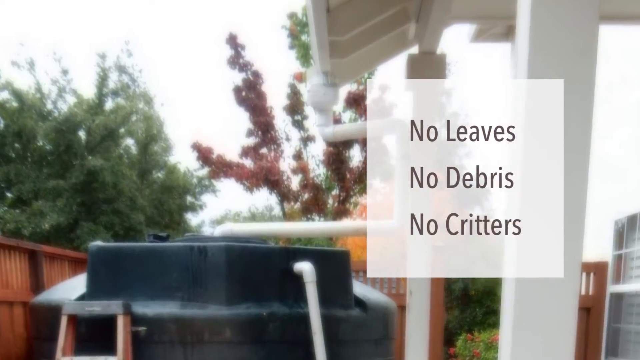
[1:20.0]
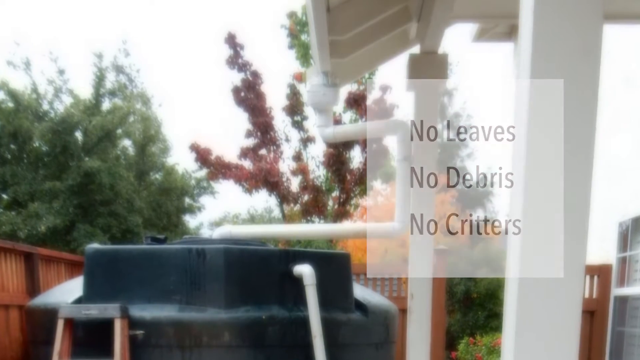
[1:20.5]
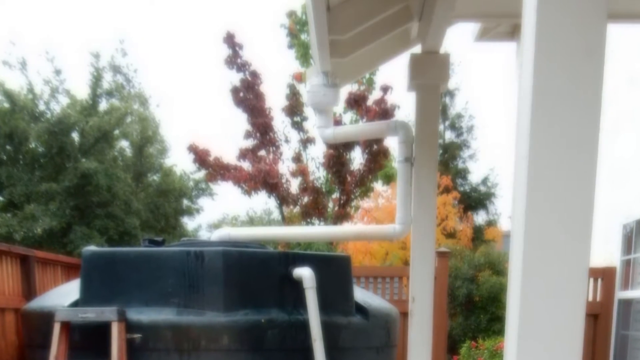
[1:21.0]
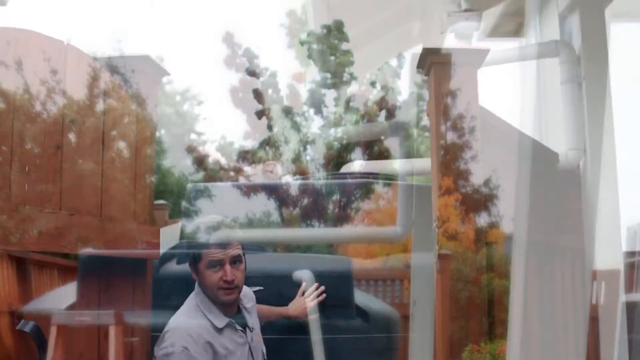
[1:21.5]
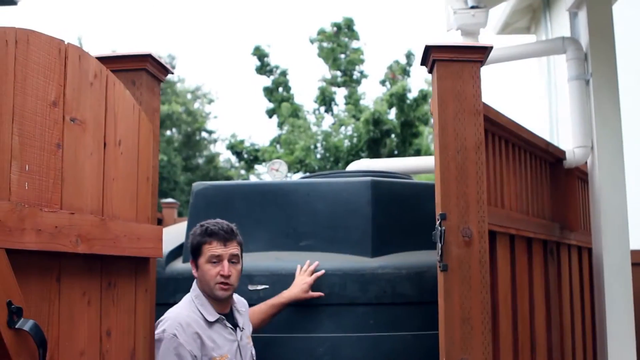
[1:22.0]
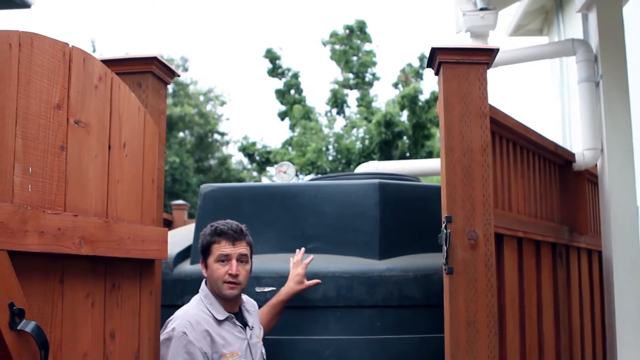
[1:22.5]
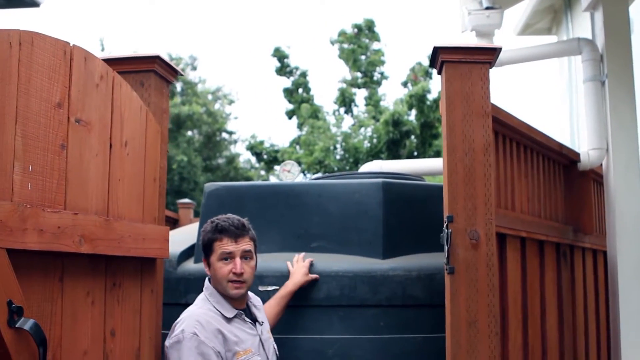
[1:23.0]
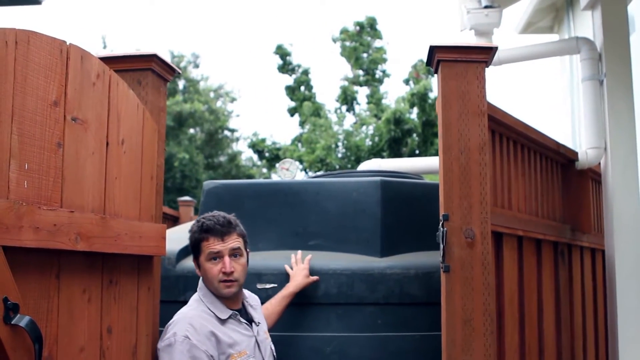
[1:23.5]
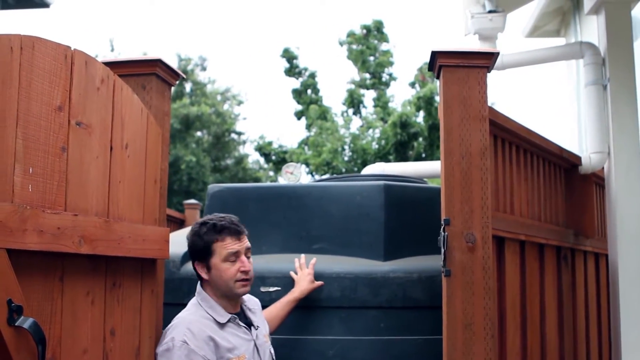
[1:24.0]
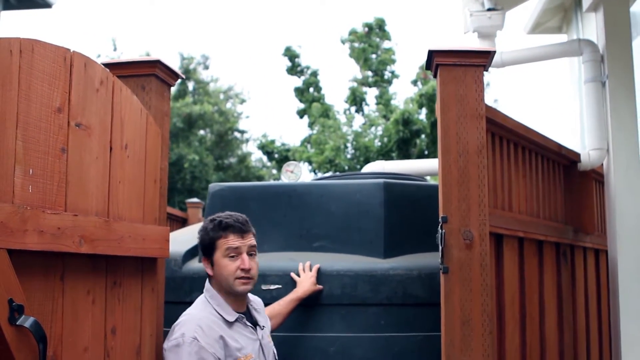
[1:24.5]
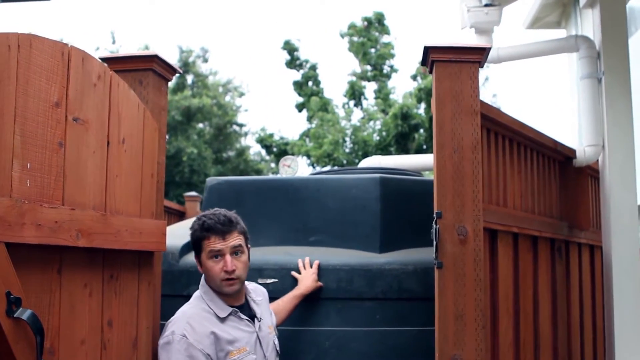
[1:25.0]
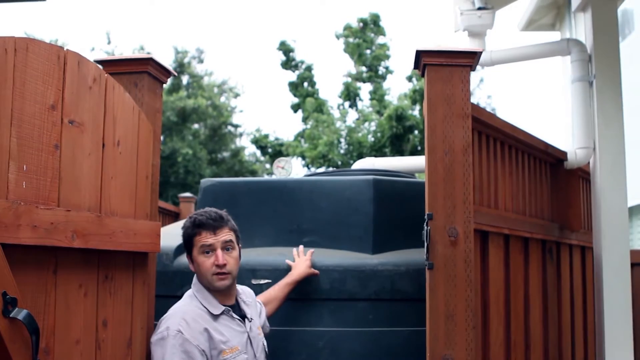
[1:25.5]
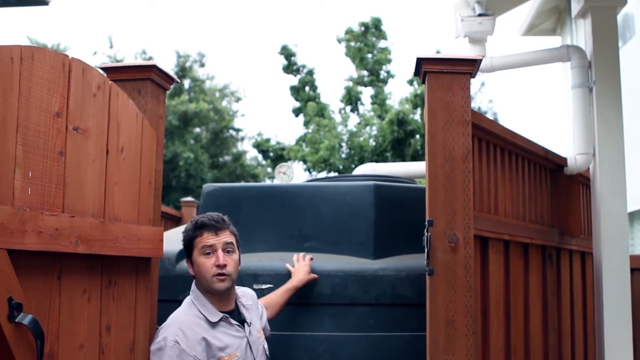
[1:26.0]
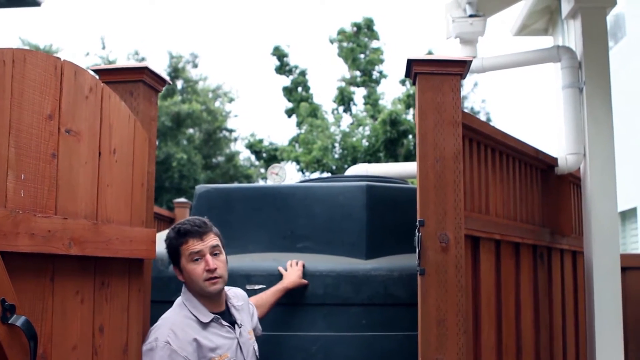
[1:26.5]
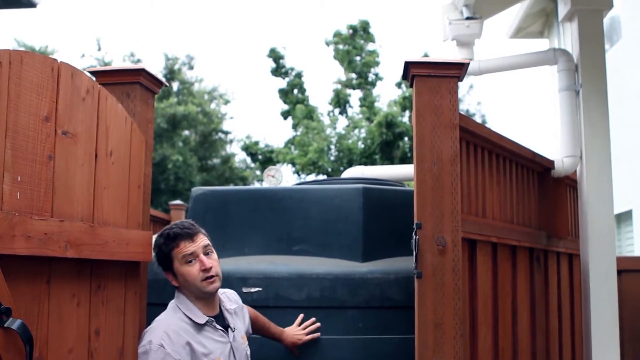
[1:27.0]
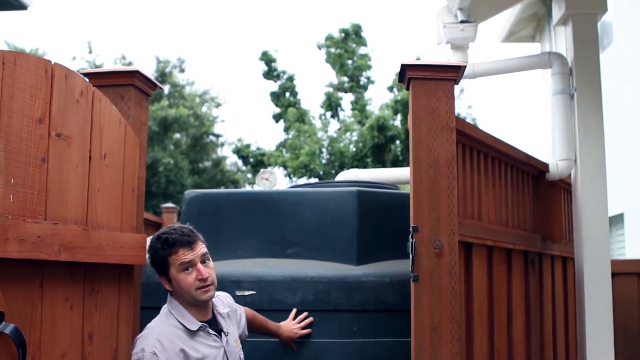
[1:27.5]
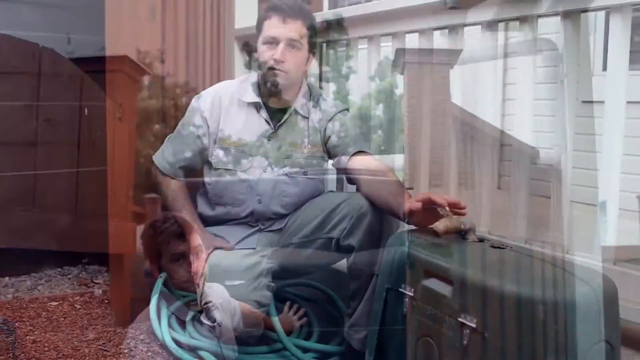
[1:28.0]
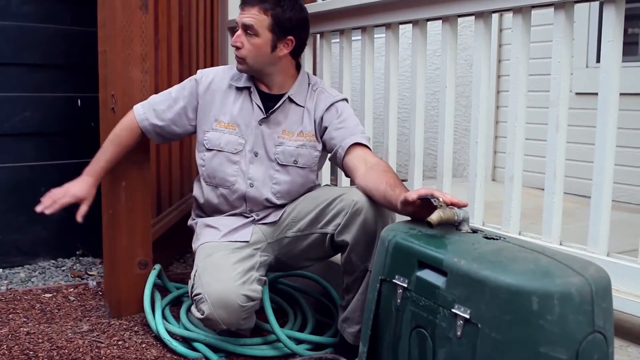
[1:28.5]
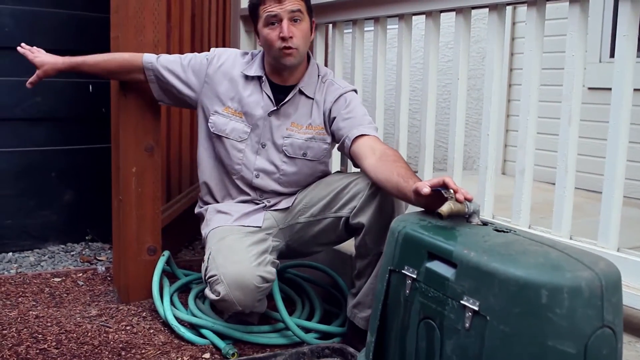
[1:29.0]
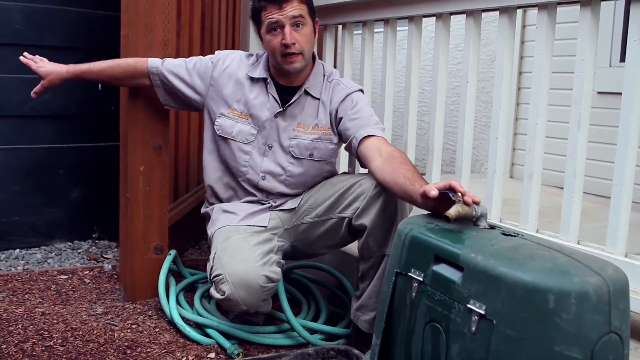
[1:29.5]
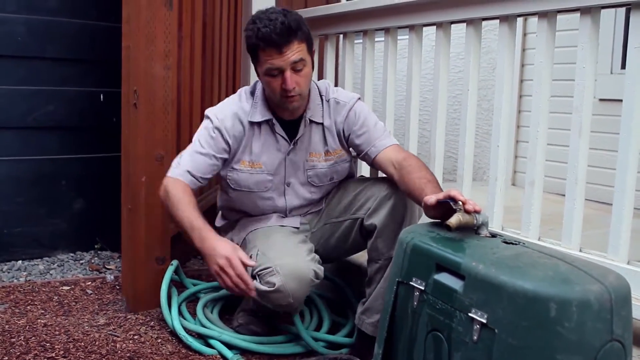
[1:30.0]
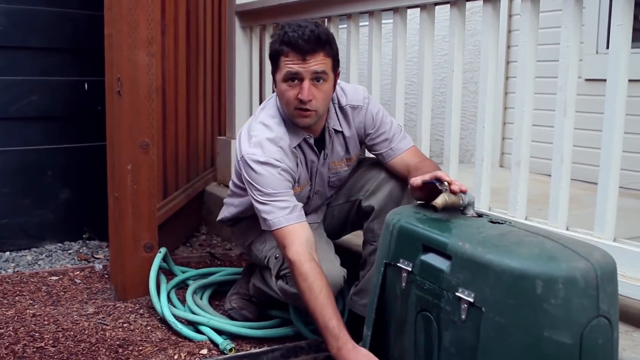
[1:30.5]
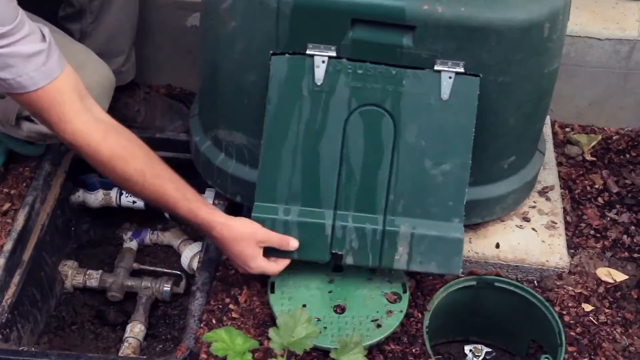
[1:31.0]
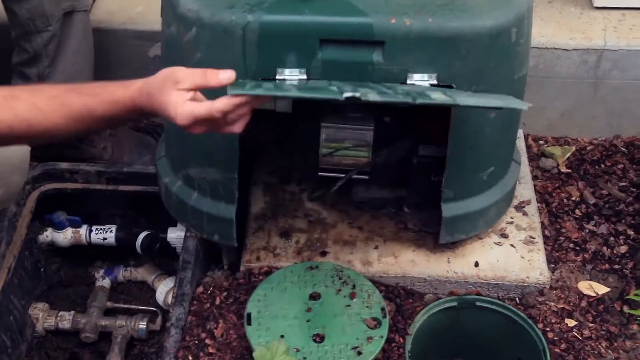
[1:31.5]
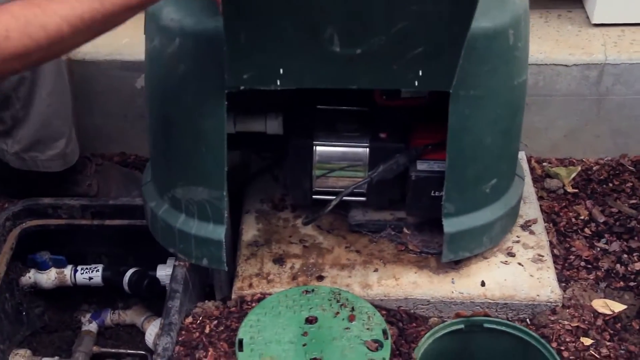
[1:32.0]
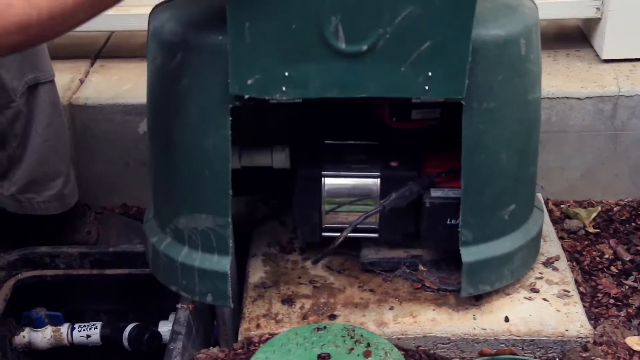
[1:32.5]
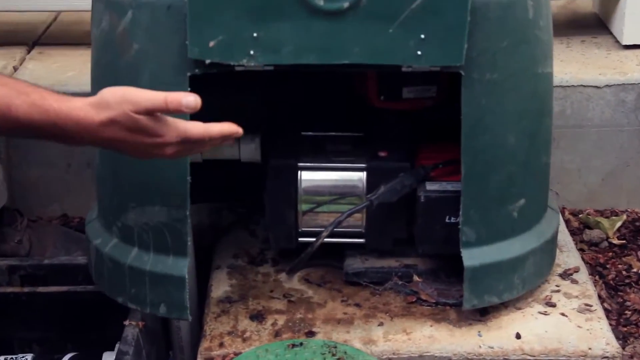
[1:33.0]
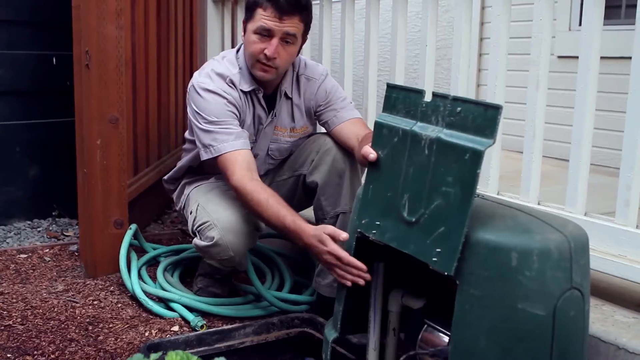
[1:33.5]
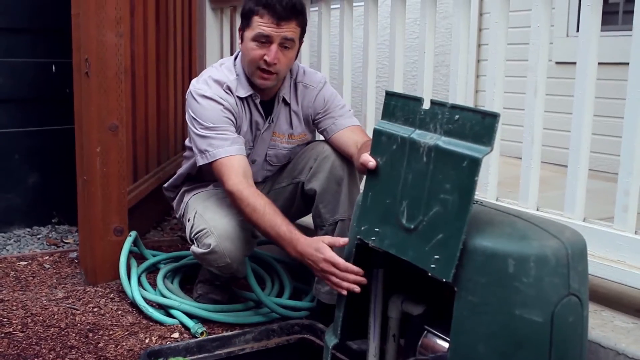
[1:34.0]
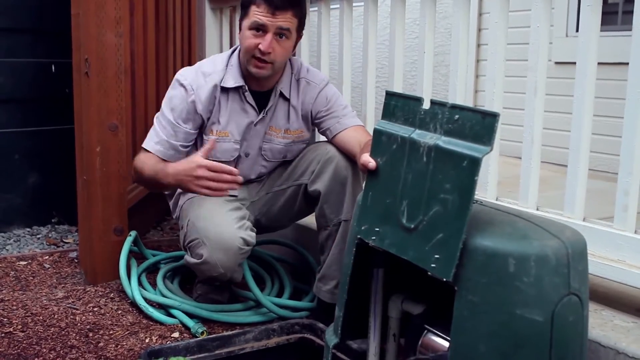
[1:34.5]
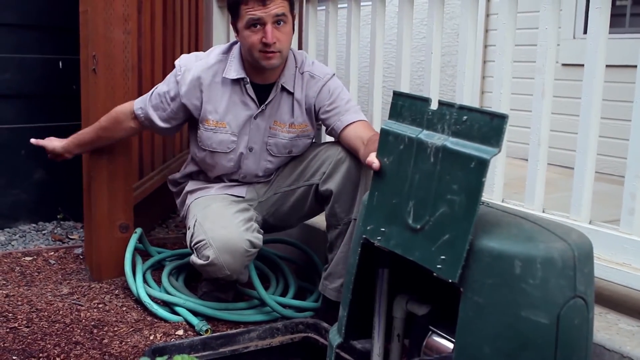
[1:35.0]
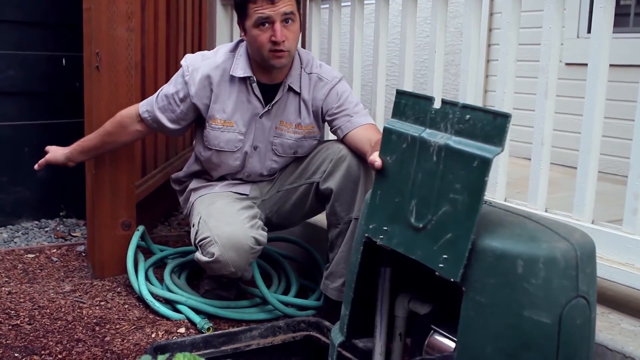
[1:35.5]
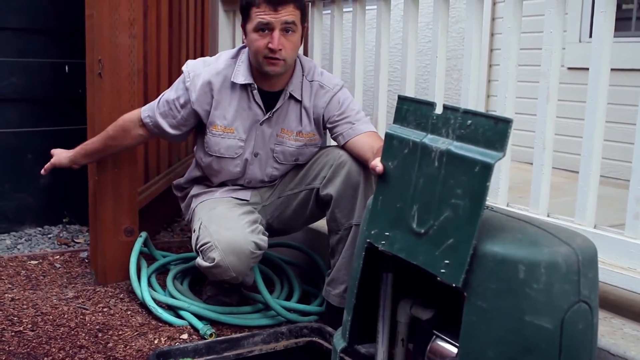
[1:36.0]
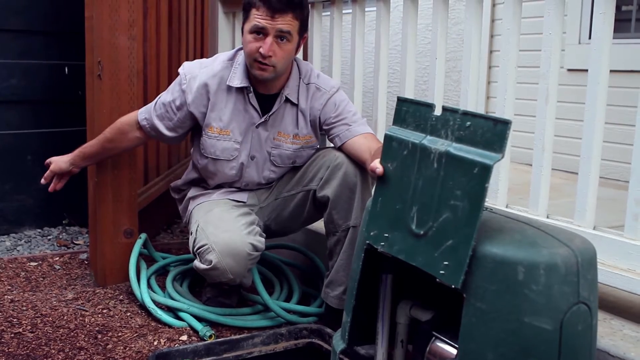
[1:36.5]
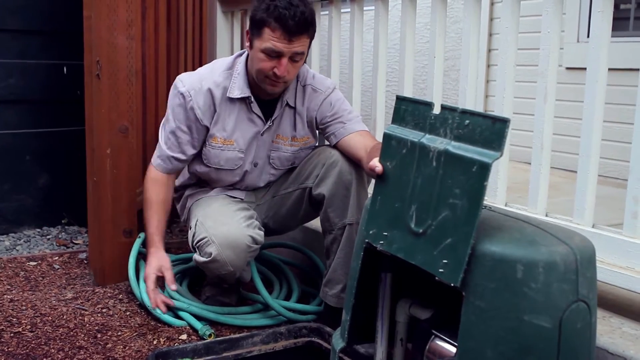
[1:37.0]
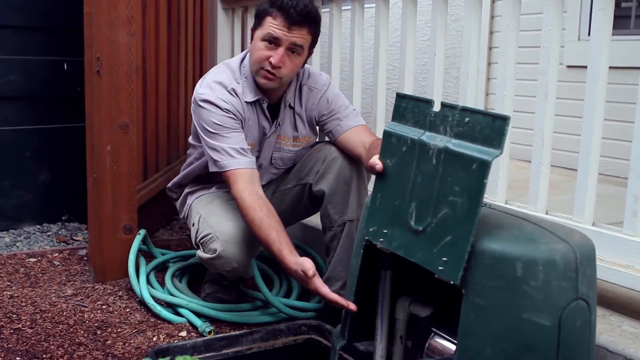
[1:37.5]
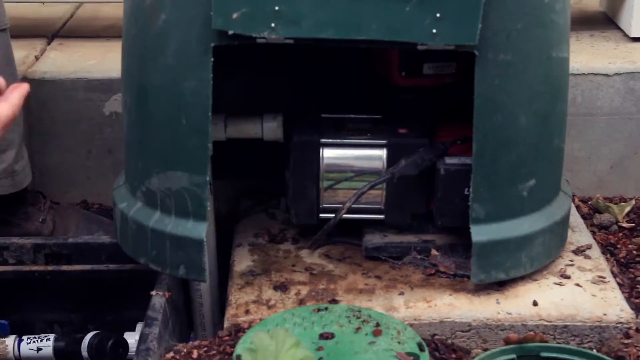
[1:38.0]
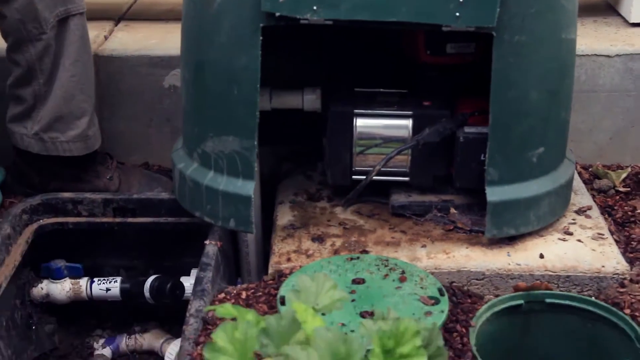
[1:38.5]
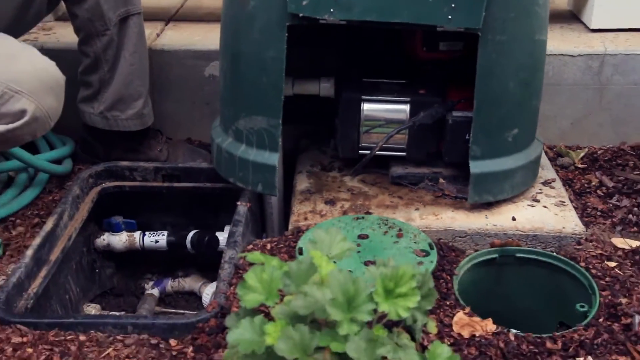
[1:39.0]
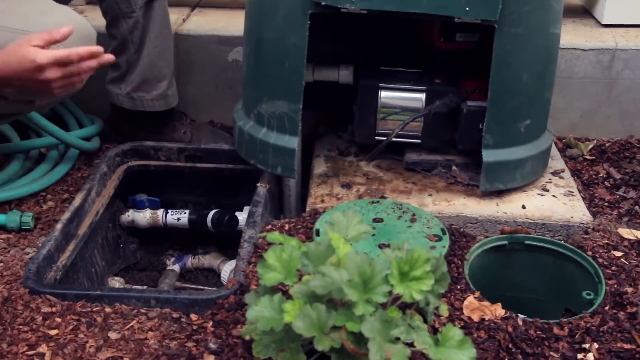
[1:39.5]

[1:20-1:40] Some plants are burgundy and others green. Ellen introduces the bottle green or dark green water collection tank. He then shows what looks like a little tank that seems to be connected to the bigger water collection tank for irrigation. Pipes come from the roof of the house and connect to the water collection tank. Next to him is a green hose pipe that looks several meters long. Text about the water collection tank says "no leaves," "no debris" and "no critters."